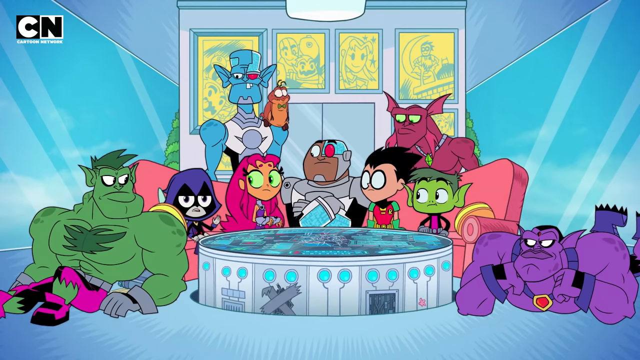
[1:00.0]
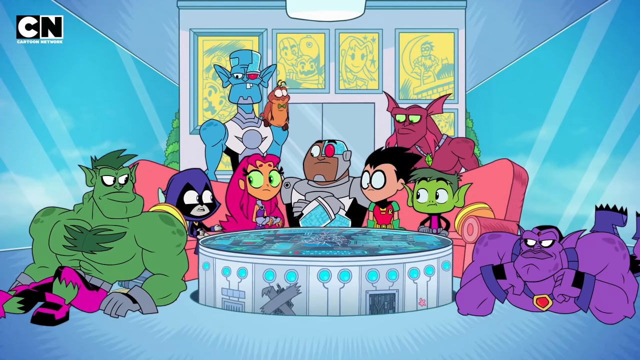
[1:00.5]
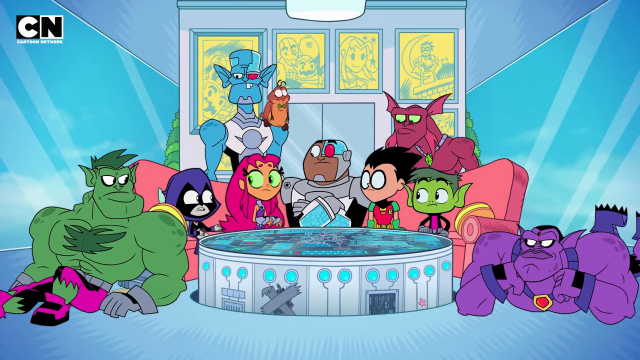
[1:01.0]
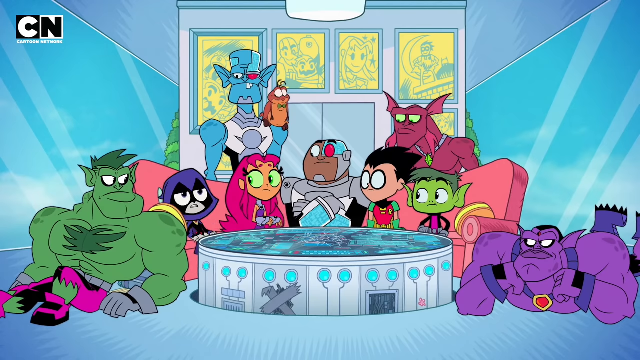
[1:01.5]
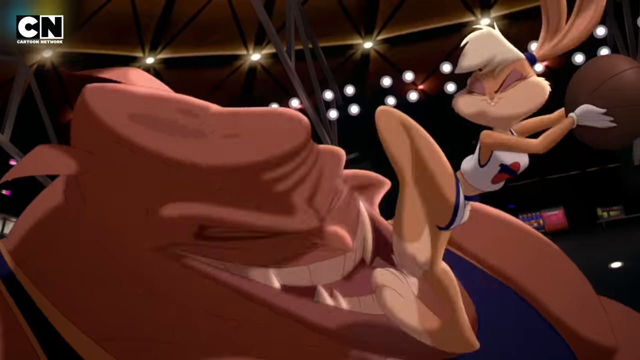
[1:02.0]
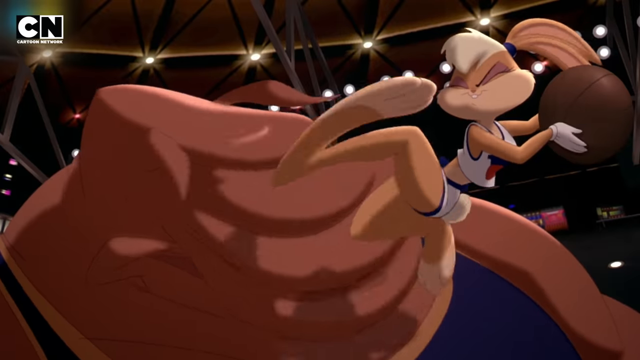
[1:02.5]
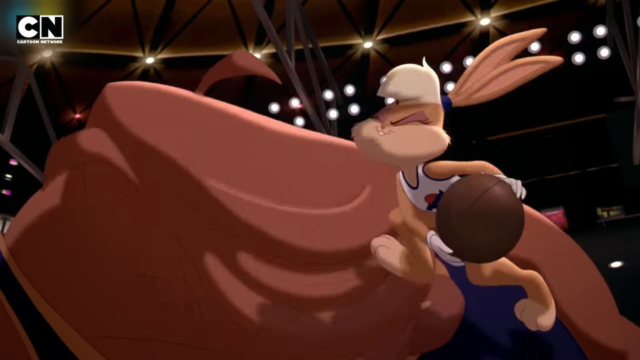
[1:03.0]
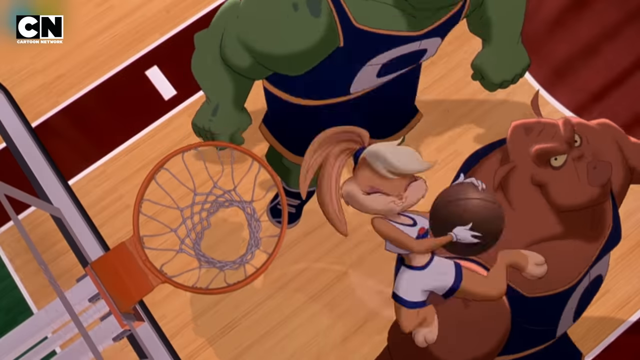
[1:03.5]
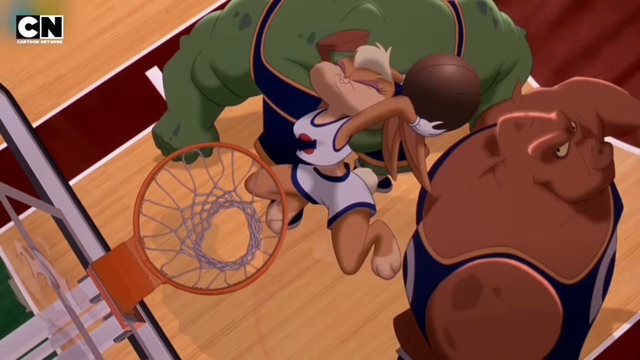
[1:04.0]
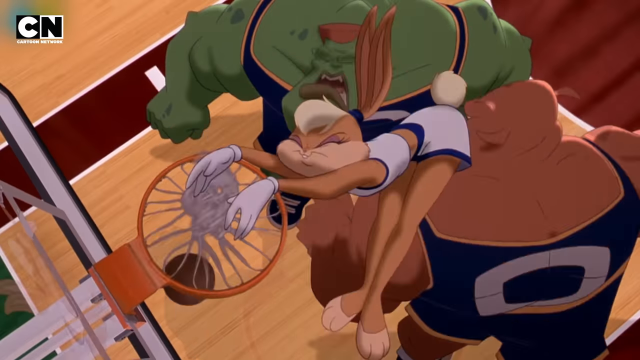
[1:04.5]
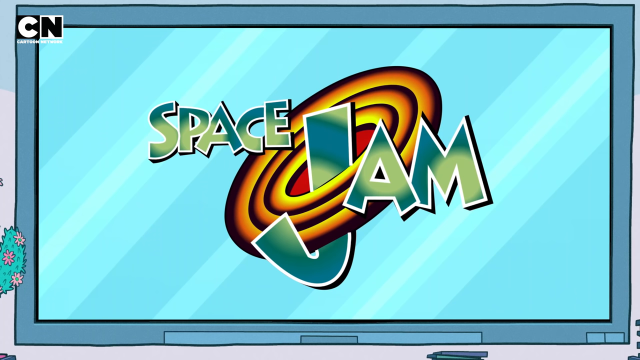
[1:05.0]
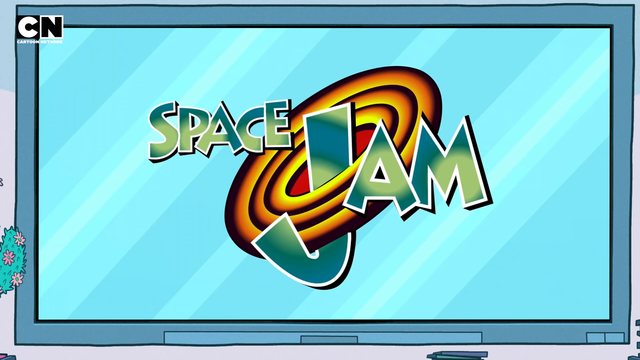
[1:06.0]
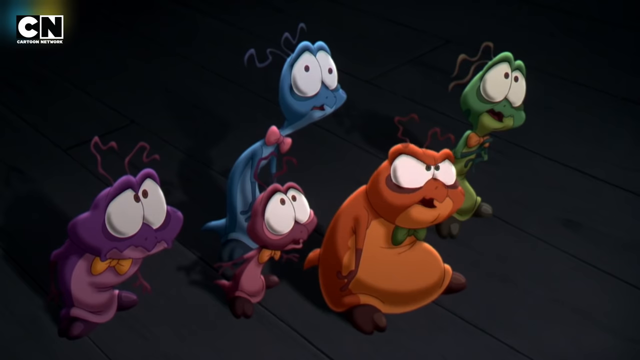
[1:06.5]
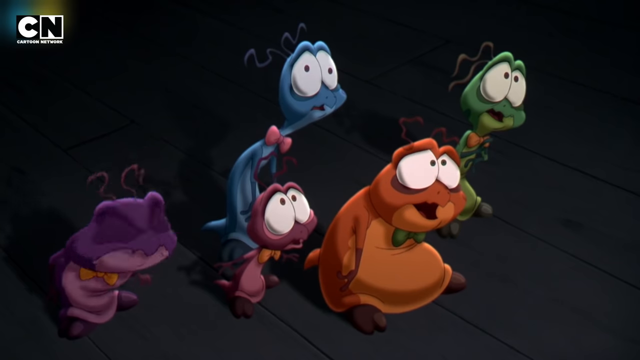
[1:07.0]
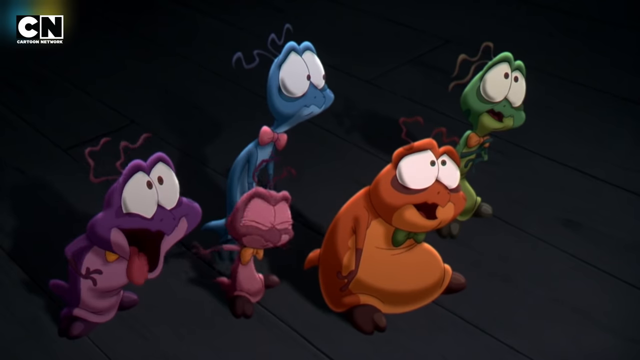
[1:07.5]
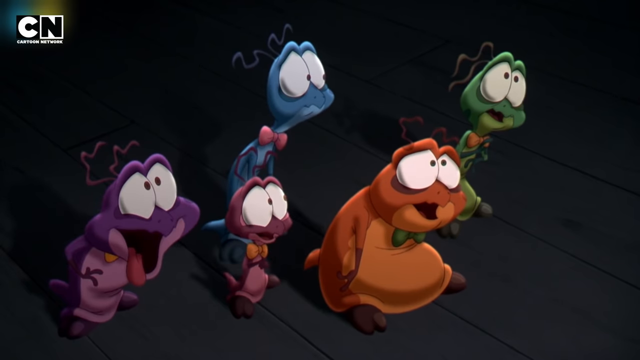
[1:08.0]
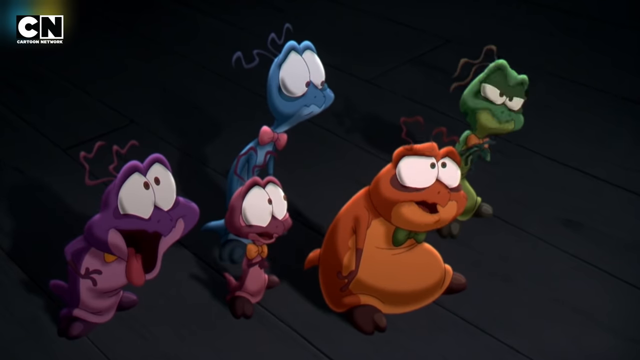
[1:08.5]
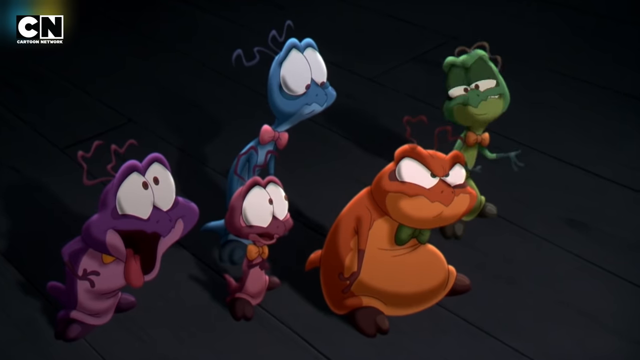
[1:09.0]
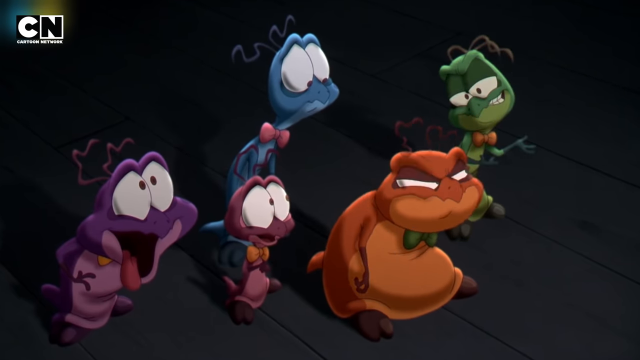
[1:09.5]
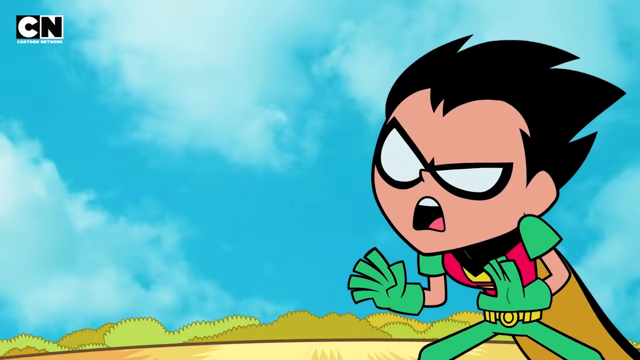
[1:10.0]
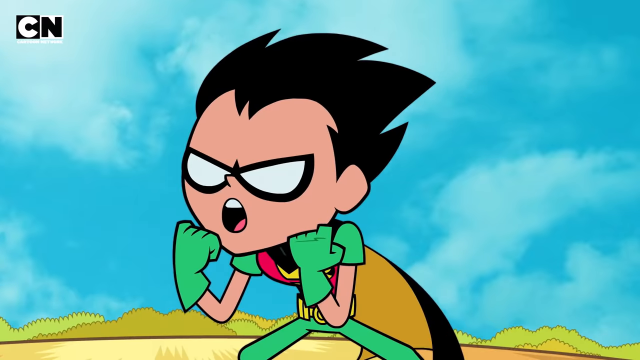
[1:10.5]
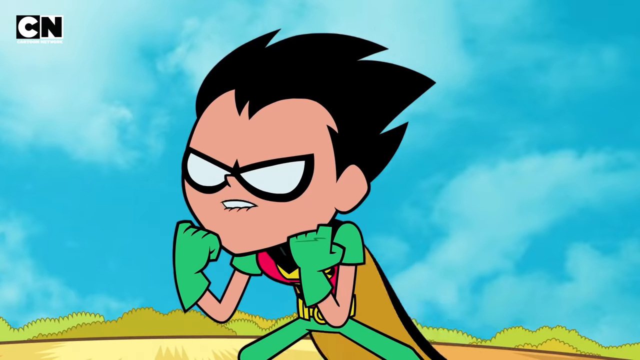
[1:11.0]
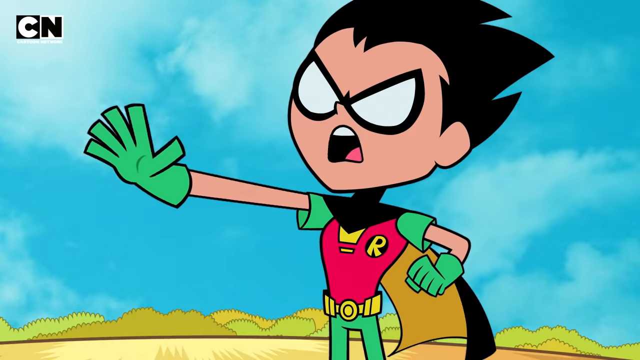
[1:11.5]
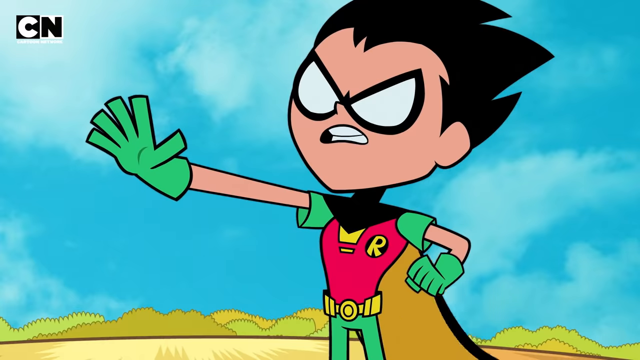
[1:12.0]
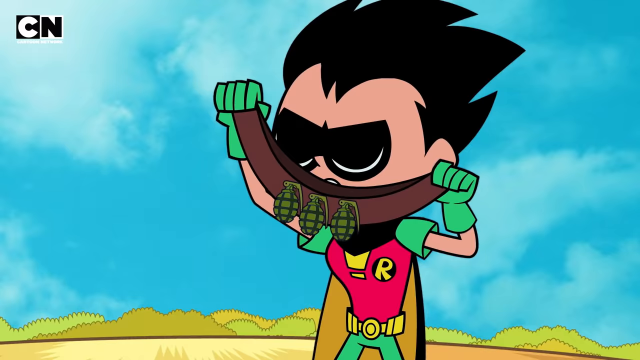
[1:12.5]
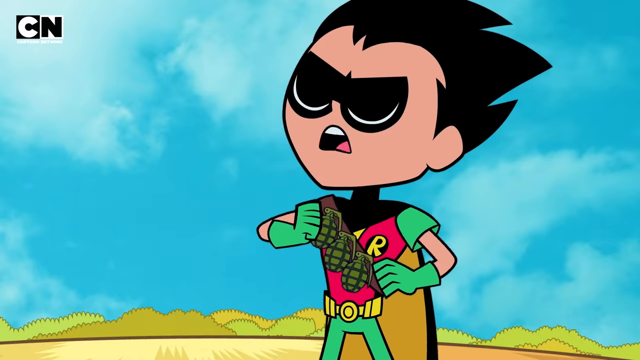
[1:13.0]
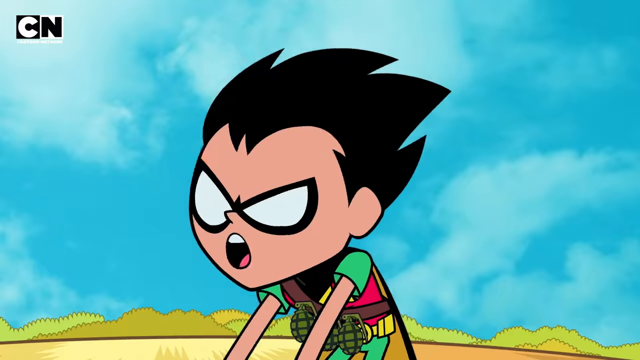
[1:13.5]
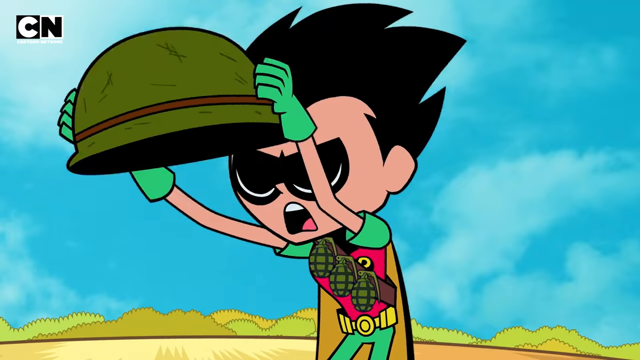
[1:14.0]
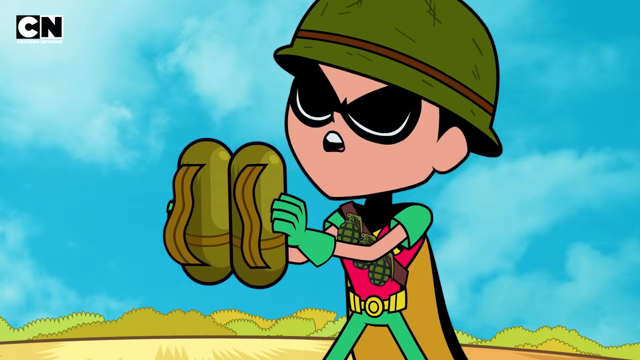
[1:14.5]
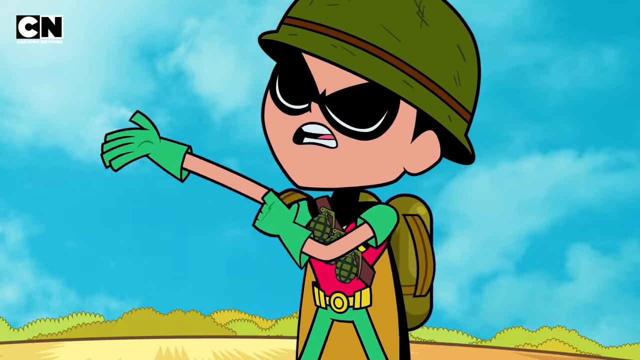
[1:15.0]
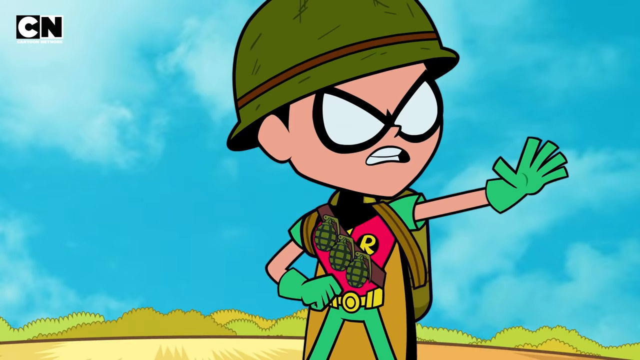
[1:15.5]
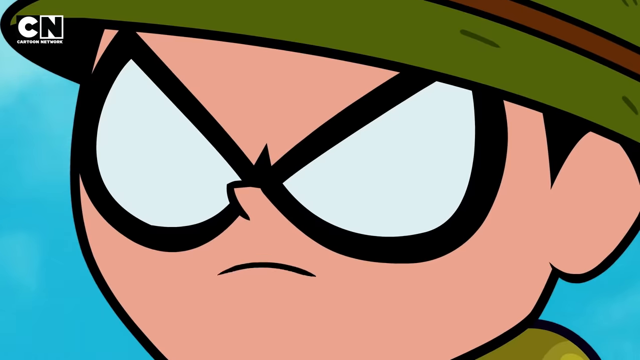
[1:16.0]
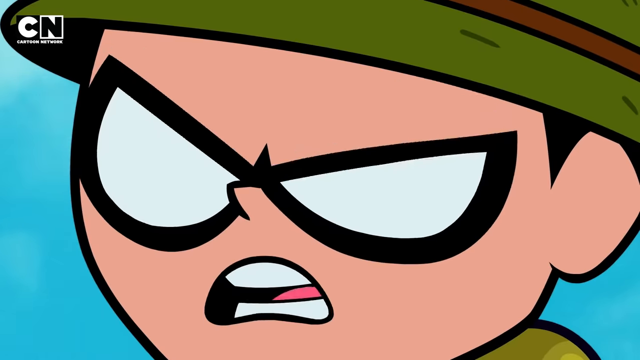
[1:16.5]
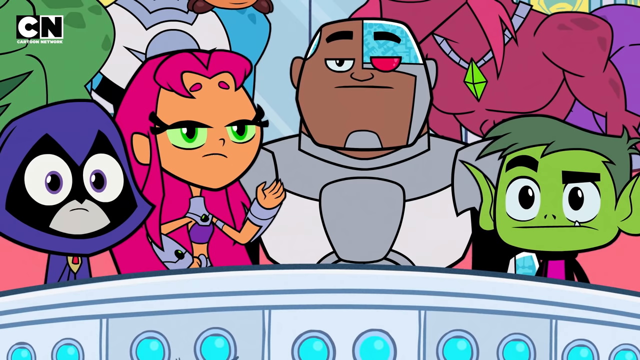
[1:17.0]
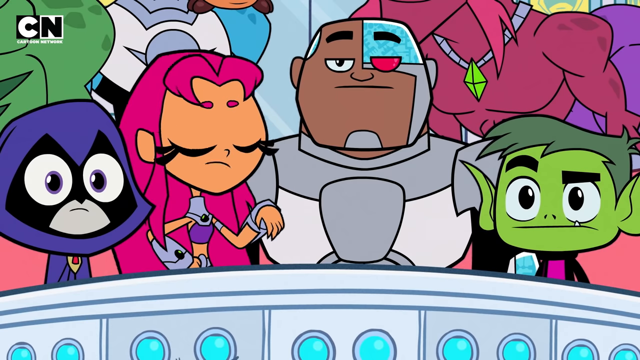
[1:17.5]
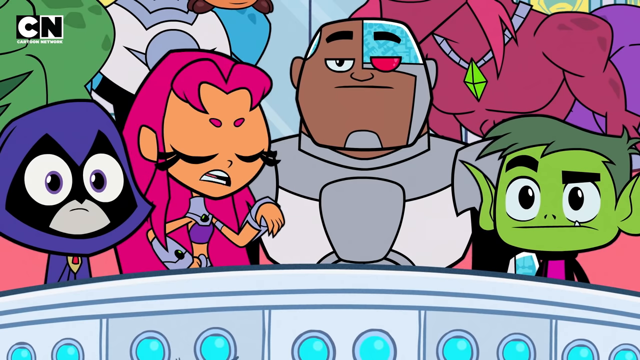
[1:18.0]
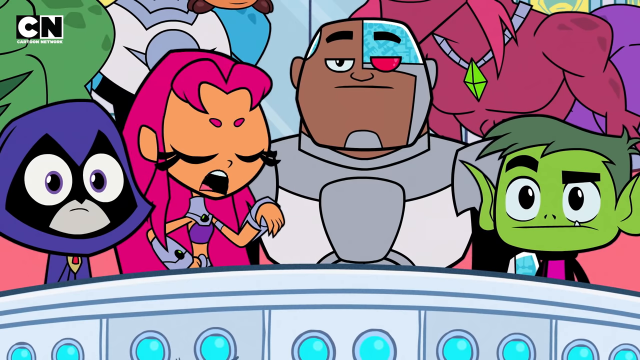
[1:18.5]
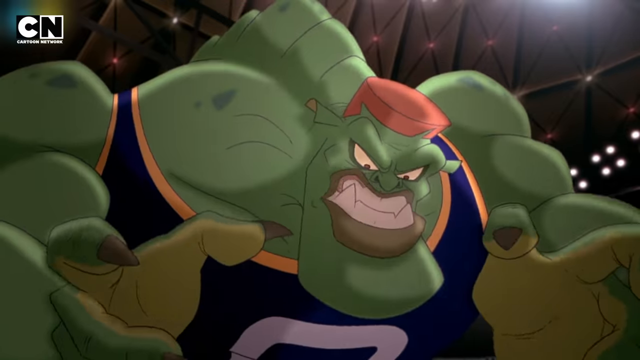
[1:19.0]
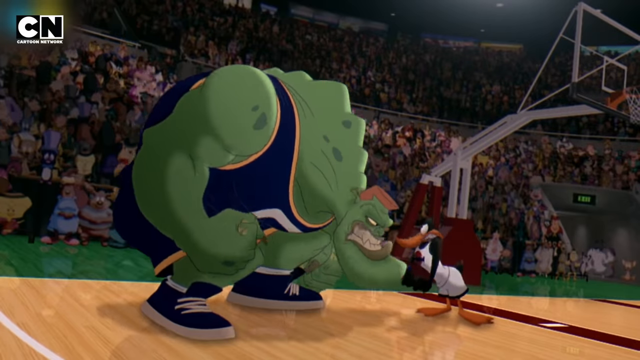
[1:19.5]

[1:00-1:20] A group of modern cartoon characters sits in a room, many of them on a curved pink sofa behind a round table. Four additional characters look like monsters: one purple, one pink, one blue and one green. They all appear to be sitting and talking to each other. Clips from the movie Space Jam follow, showing a basketball game between animated characters, some looking like traditional Warner Brothers characters and some like giant ogre-type characters. The title for the movie, Space Jam, appears on a screen. Five little bug-like characters with curvy antennas on their heads and large eyes, all different colors, look ahead at something, slightly grimacing. A character who looks like Robin from Batman straps grenades to his chest and puts on a military helmet and a backpack; he looks angry, his eyes scowling, and he appears to be yelling at somebody. The scene switches back and forth between the characters assembled in a room watching television and the Space Jam basketball game, where a giant green ogre character plays against Daffy Duck.